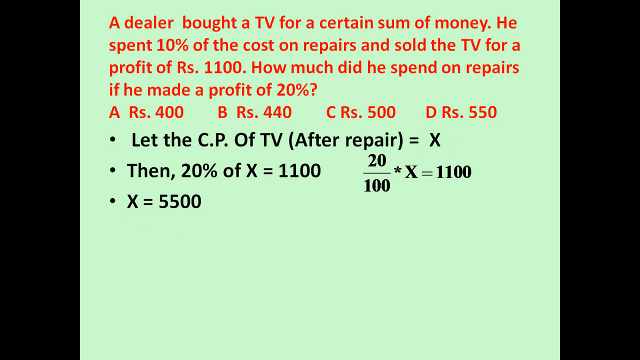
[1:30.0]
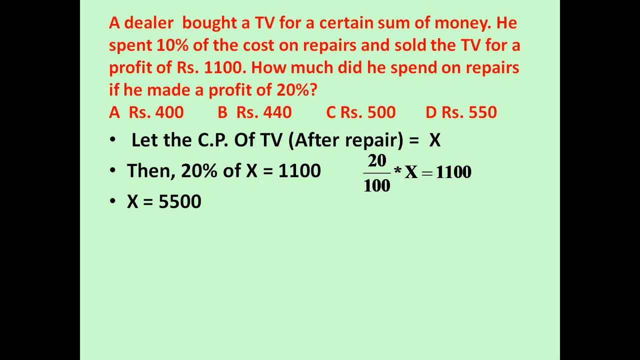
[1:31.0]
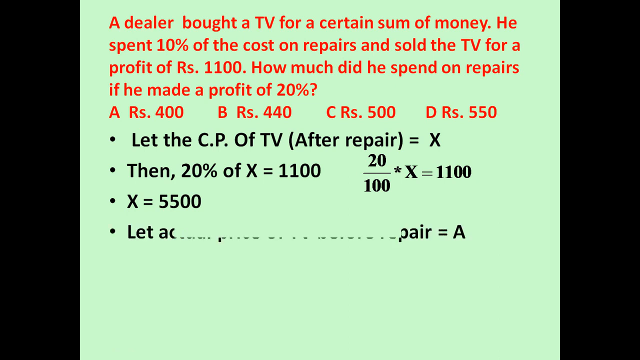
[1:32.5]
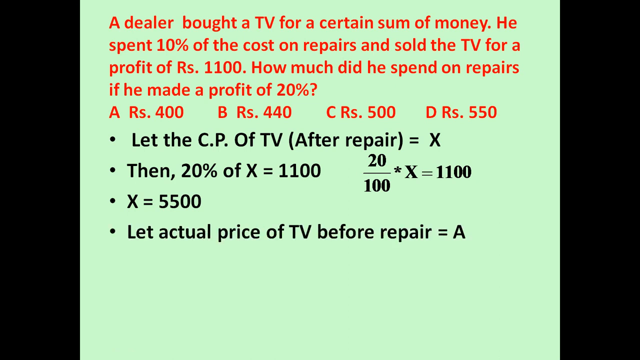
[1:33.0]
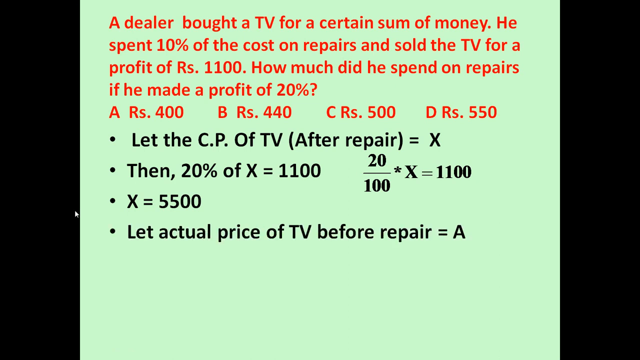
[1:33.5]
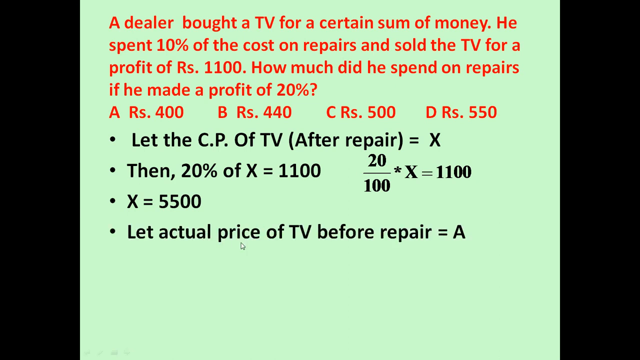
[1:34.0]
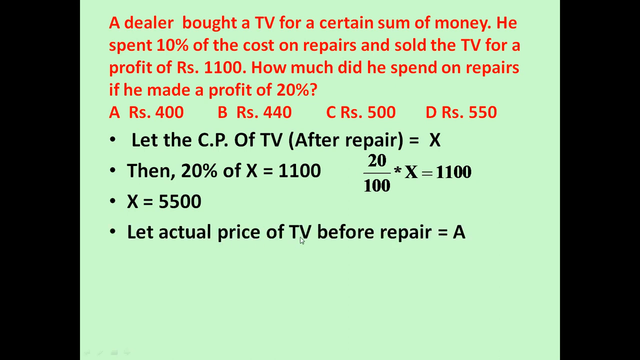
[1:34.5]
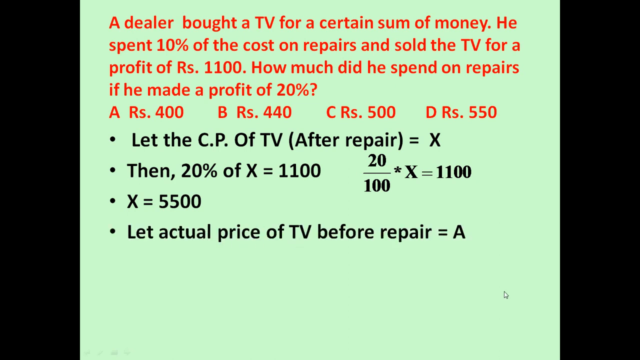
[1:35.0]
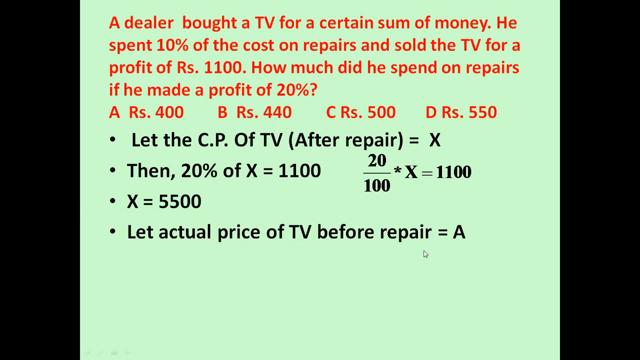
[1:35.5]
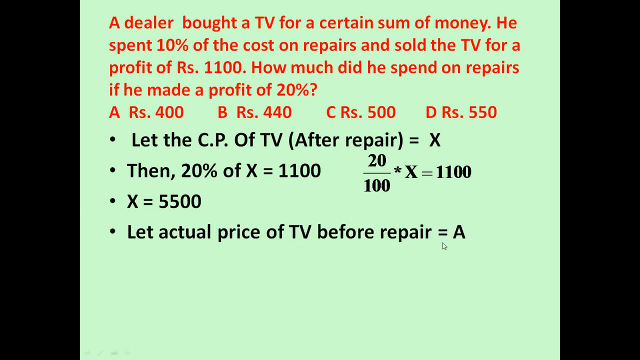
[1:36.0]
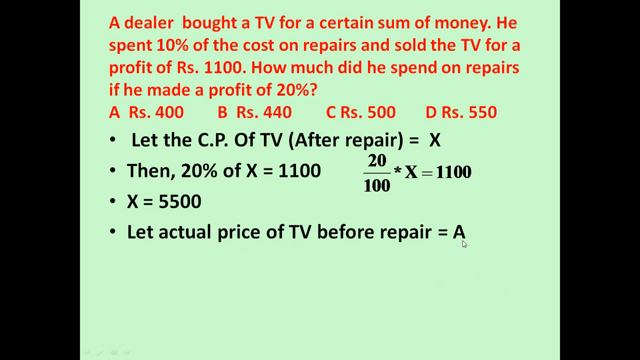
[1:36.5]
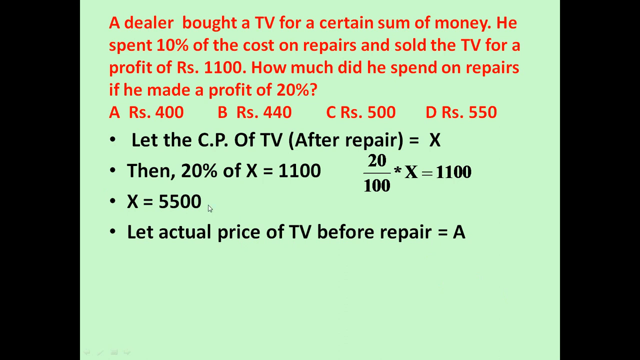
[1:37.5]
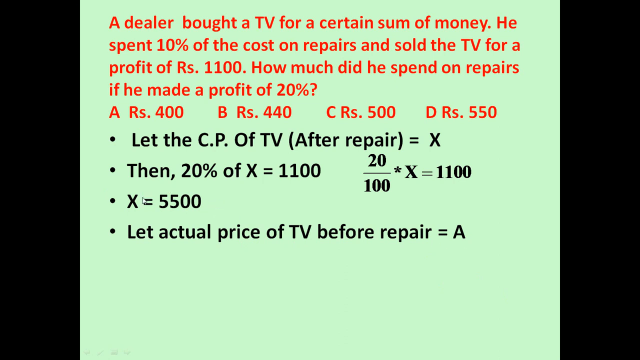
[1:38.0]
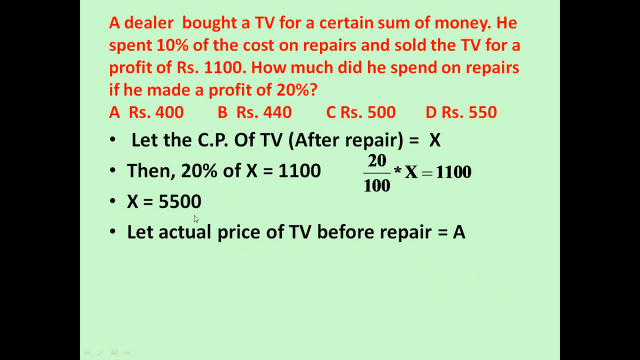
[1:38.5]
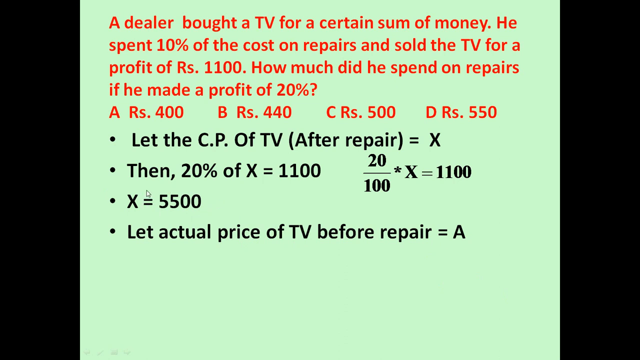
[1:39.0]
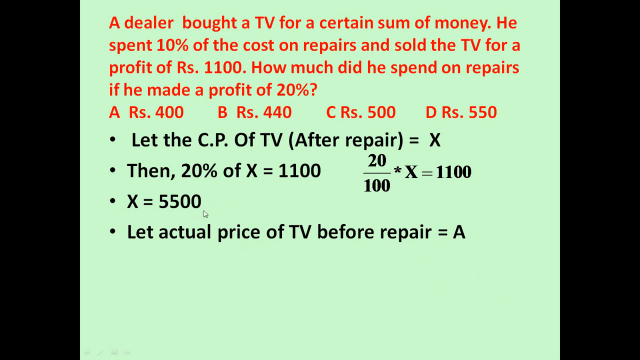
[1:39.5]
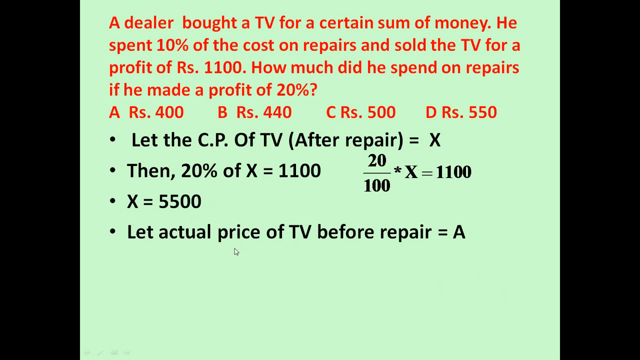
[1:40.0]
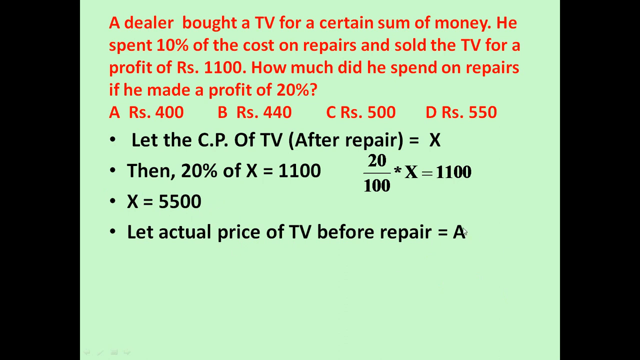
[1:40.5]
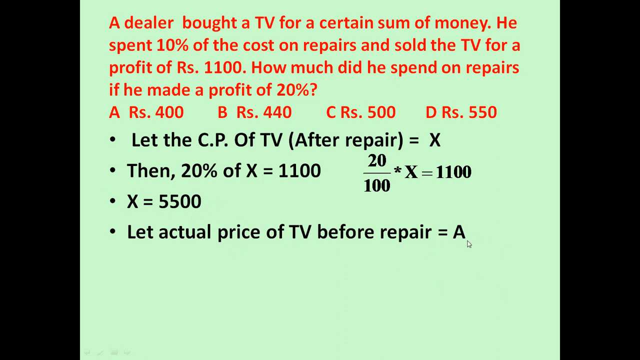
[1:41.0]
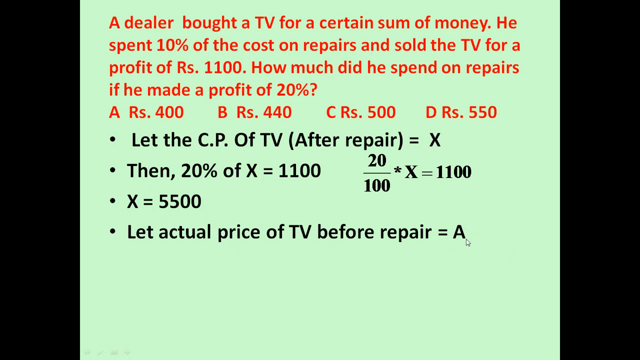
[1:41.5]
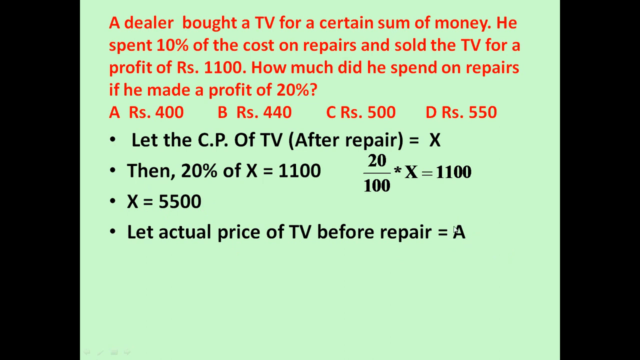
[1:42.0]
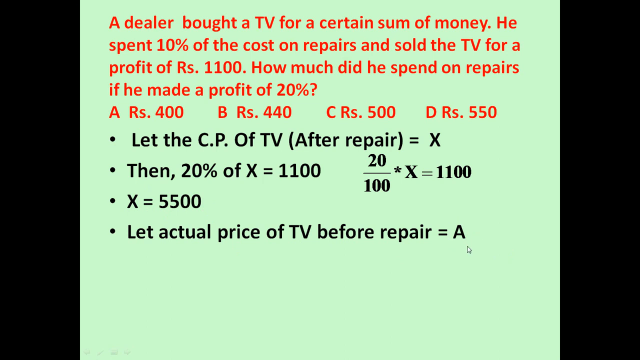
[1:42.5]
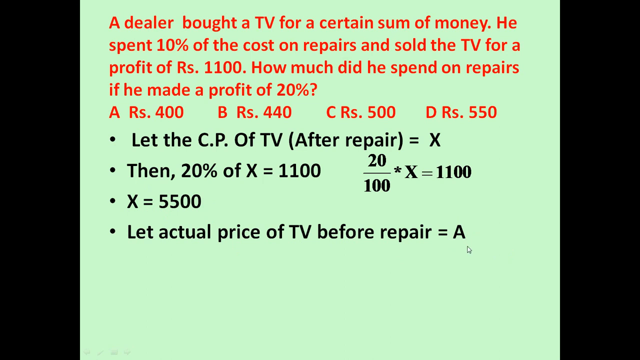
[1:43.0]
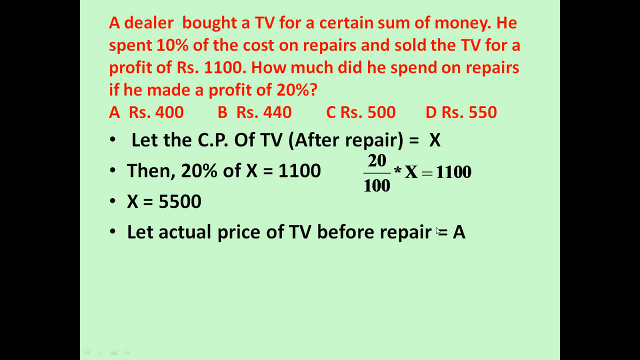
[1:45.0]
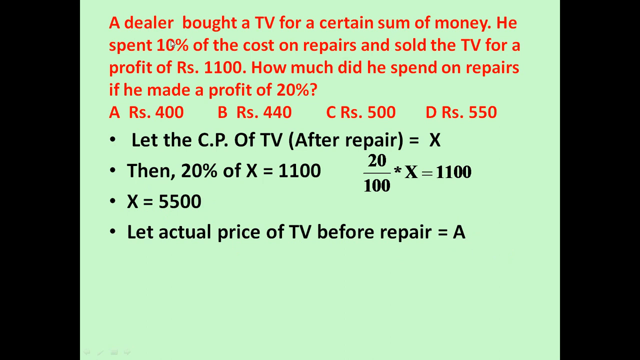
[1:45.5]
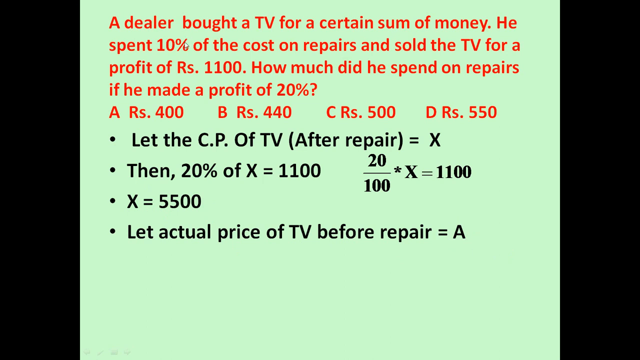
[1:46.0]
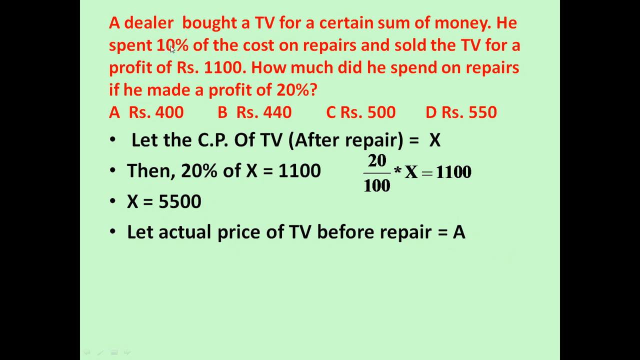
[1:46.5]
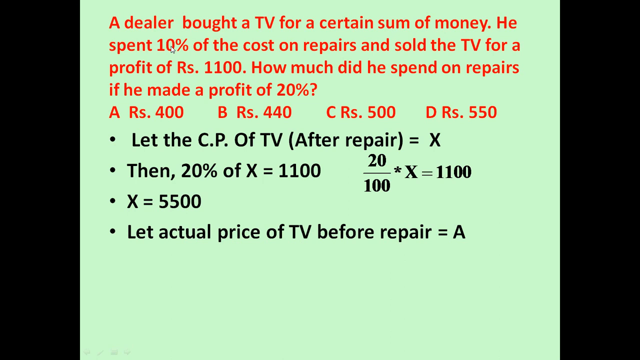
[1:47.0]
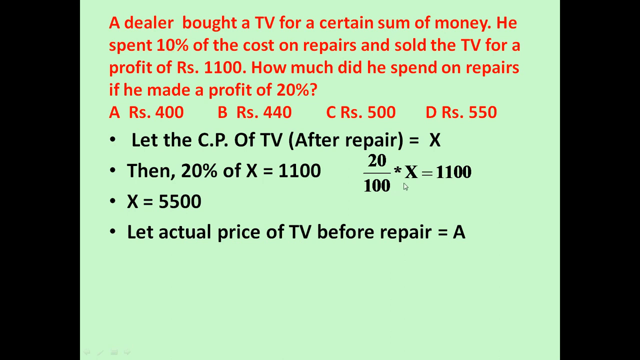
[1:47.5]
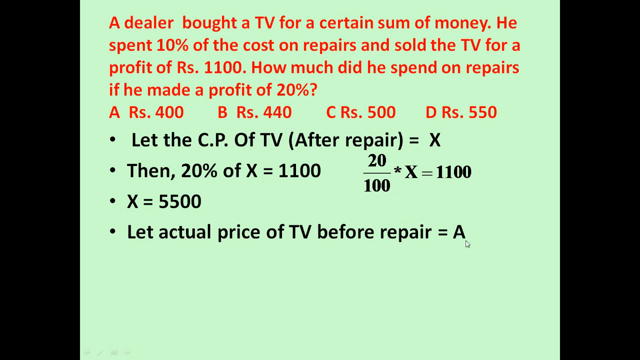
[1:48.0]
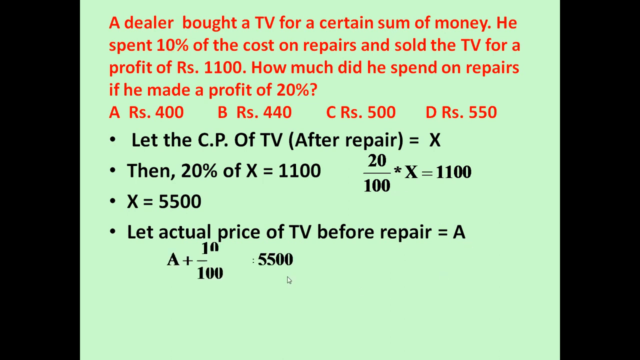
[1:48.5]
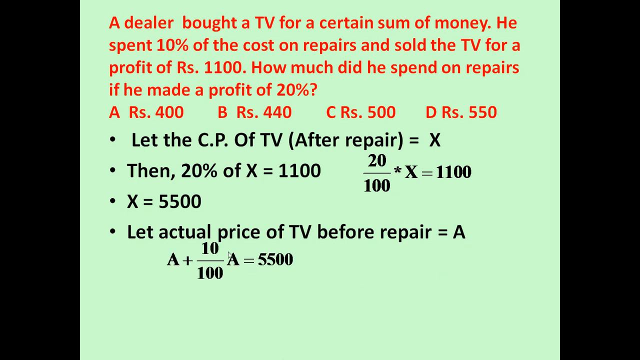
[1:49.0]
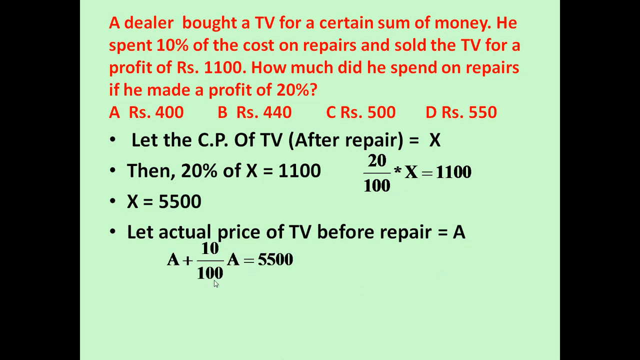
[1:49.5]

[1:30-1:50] A picture shows an Indian man with short hair, a blue shirt, and a smile on his face. Around his picture is the name A.K. Agarwal, and text says "this is the A.K. Agarwal Aptitude Series about Profits and Losses 4". It looks like a math lecture video. Next, a question appears with four possible answers, A to D. The question reads: "A dealer bought a TV for a certain amount of money. He spent 10% of the cost on repairs and sold the TV for a profit of Rs 1100. How much did he spend on repairs if he made a profit of 20%?" The options are A, 400; B, 440; C, 500; D, 550. The problem is then solved, with the working typed in black, and the answer is C, Rs. 500.